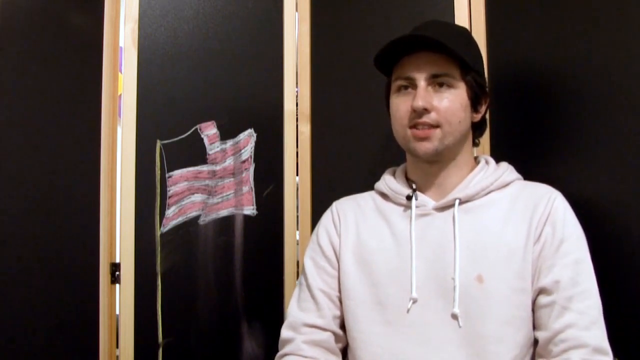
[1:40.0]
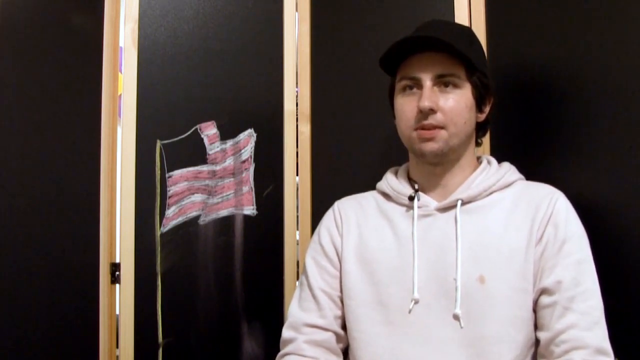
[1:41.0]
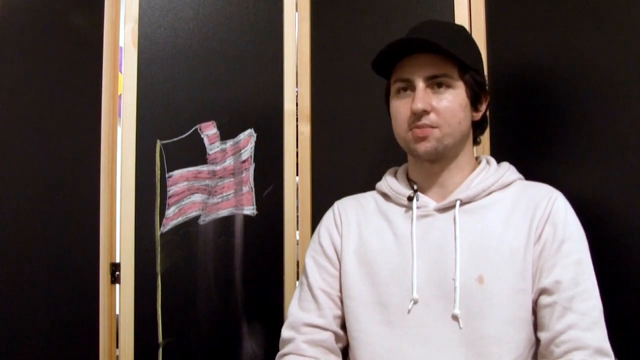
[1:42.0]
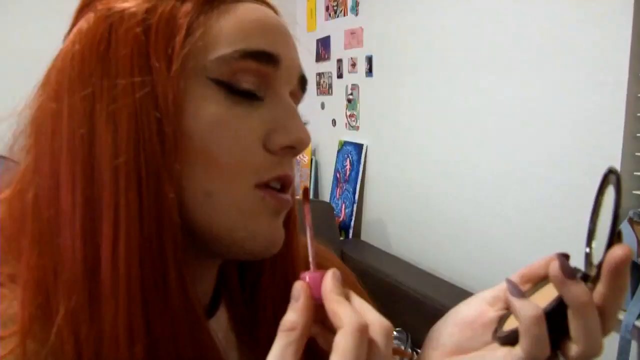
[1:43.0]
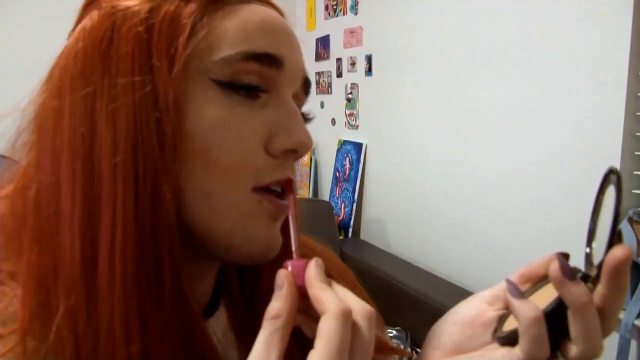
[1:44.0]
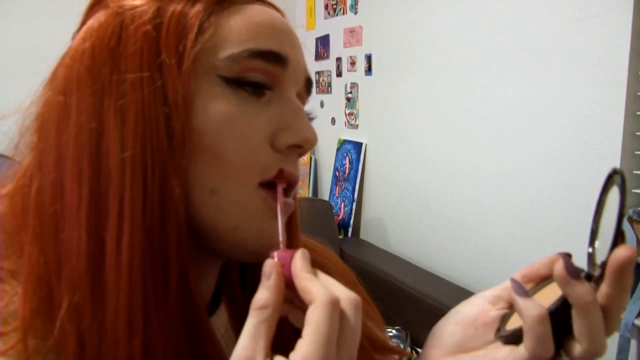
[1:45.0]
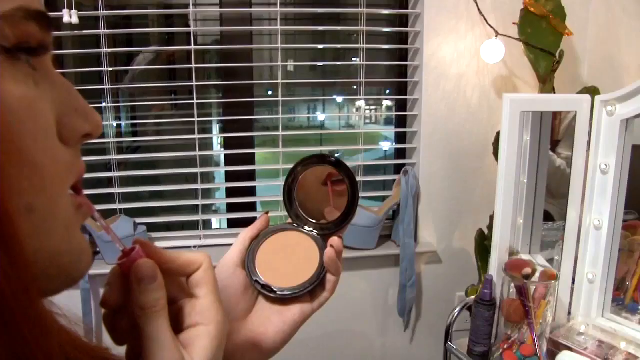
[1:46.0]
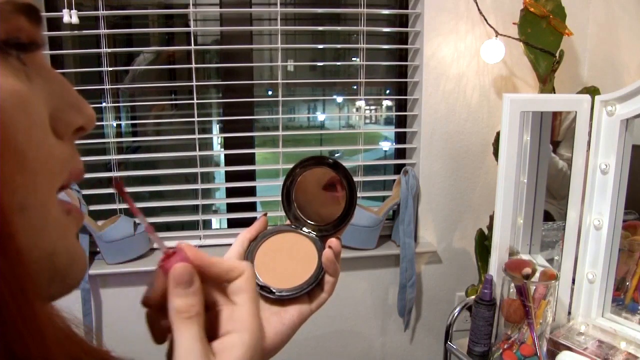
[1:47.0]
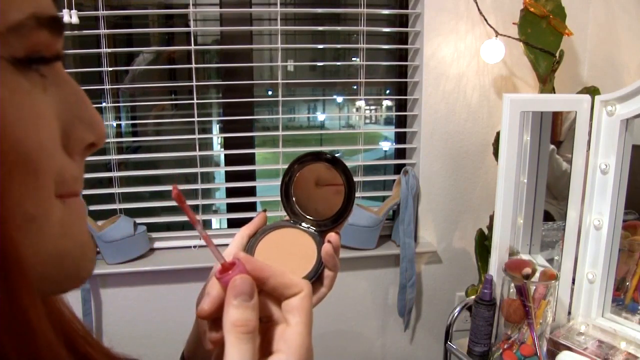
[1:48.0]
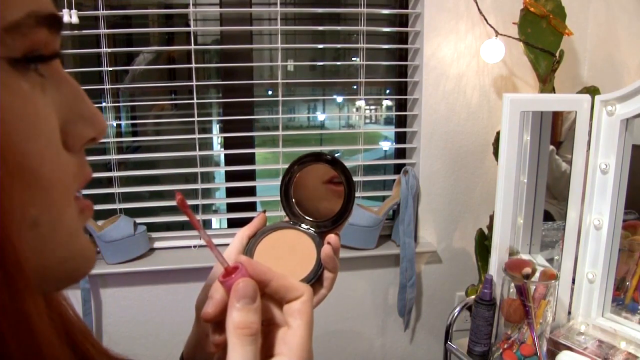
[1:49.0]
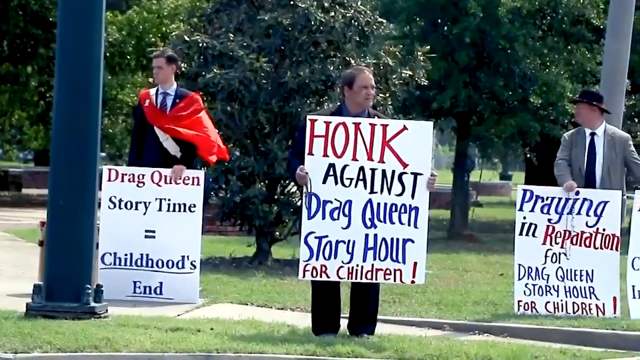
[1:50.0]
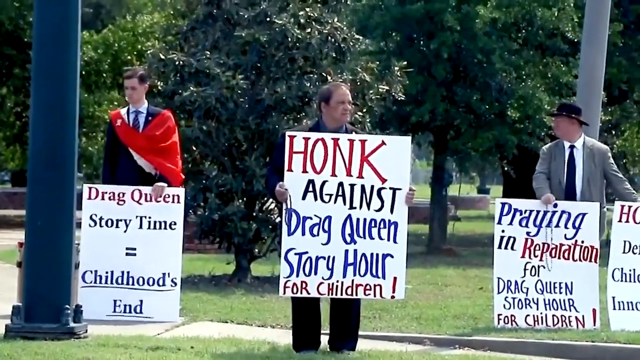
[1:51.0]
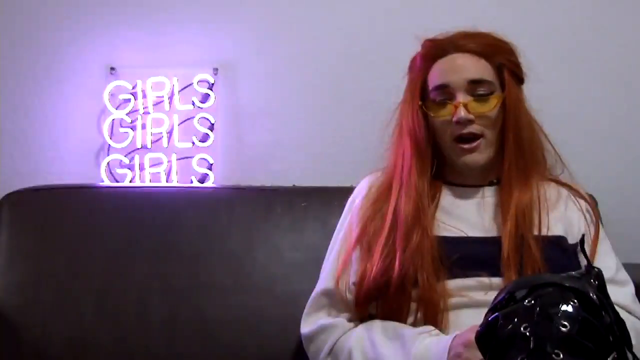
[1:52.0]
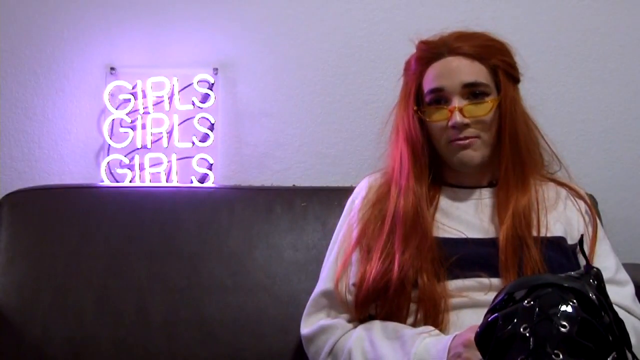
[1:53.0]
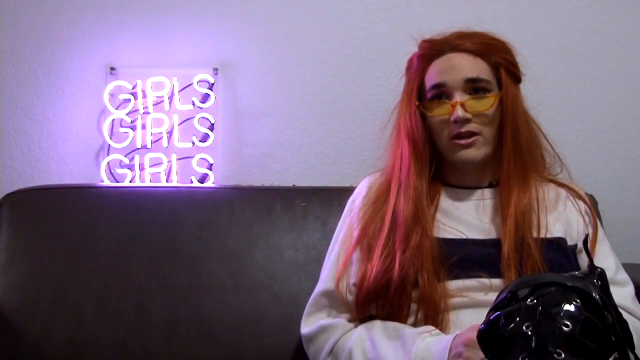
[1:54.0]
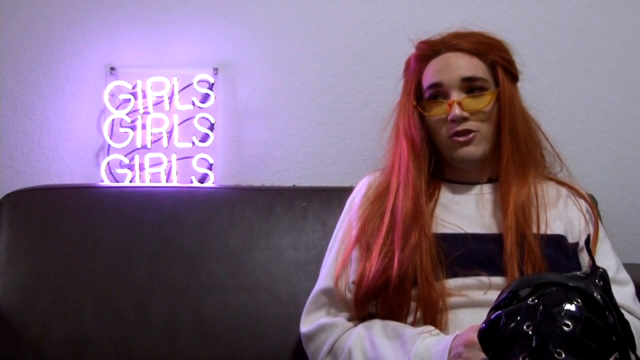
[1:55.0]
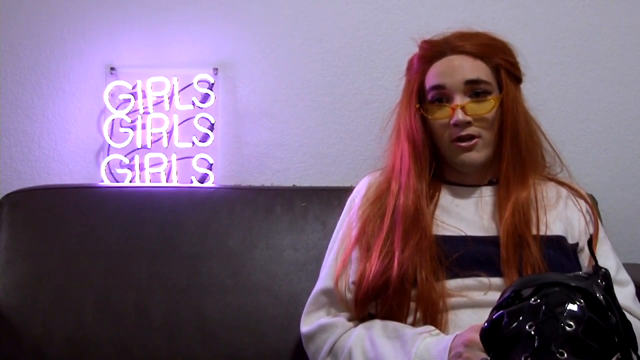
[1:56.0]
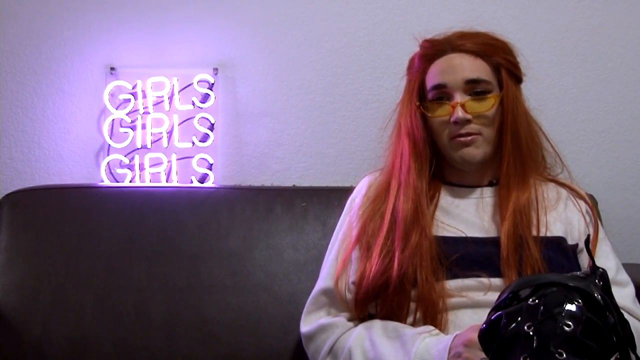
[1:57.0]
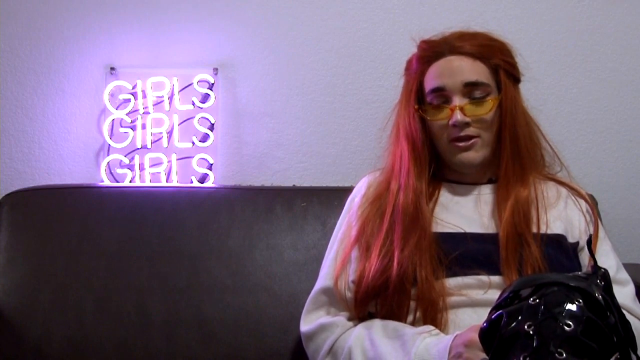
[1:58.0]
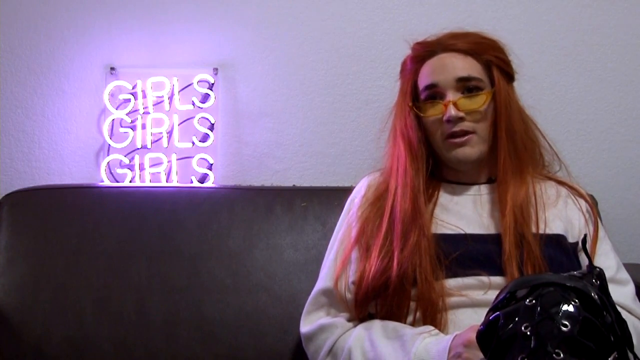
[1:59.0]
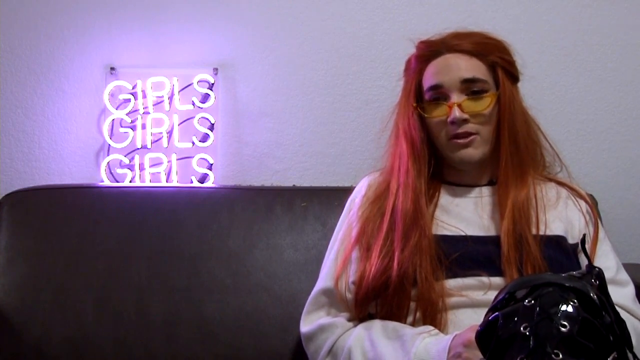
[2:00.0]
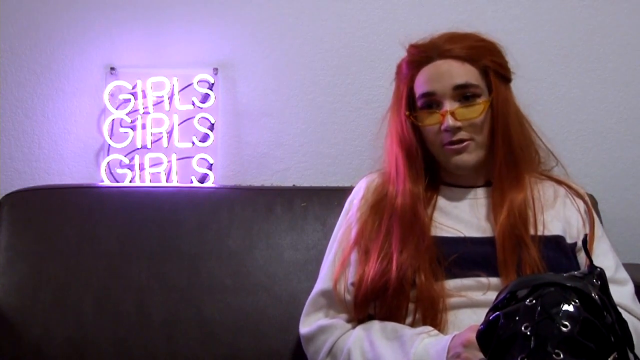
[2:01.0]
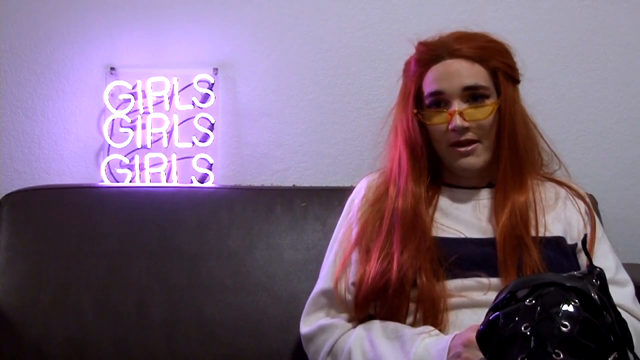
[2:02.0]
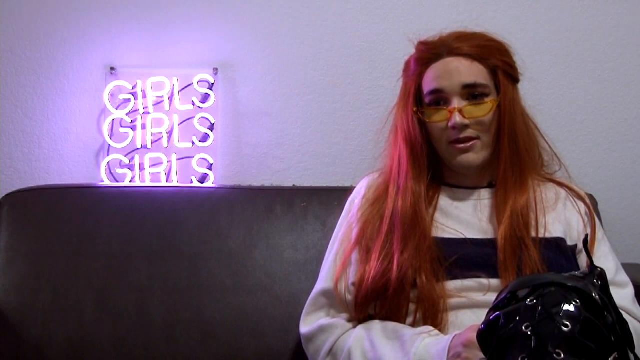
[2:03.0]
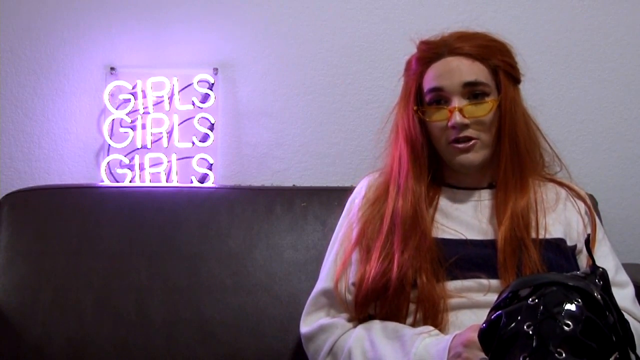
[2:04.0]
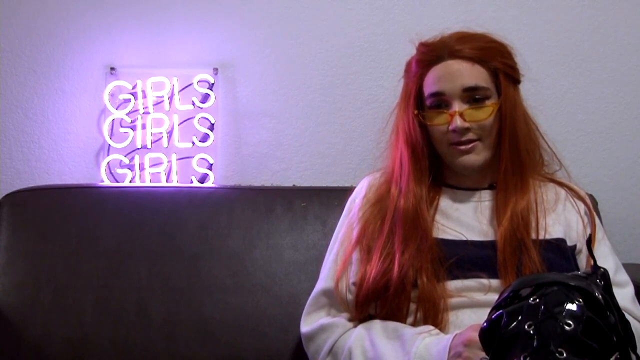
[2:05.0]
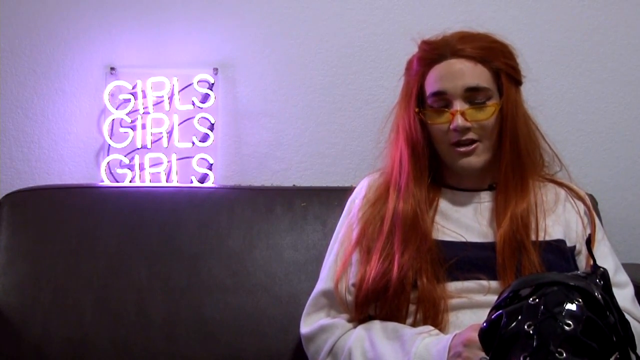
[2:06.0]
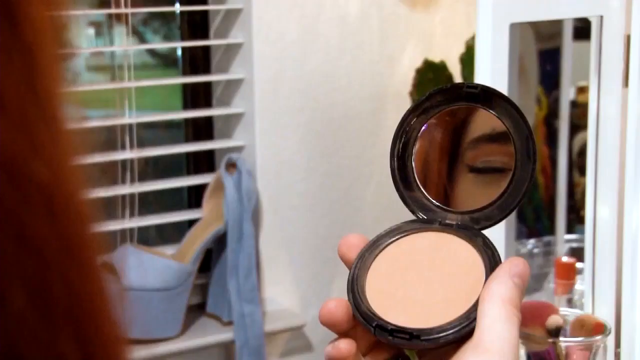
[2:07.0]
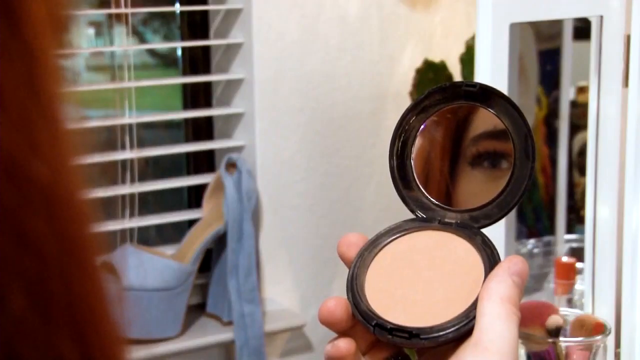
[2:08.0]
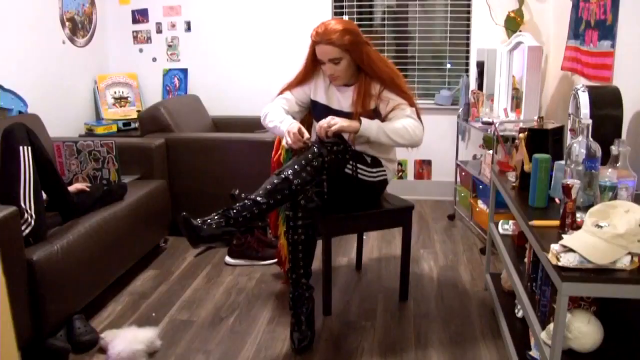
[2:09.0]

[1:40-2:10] The person continues talking to the camera. A different shot shows the right-hand side of a person with heavy eye makeup and a long orange wig, applying lip gloss to their lips with their right hand while looking into a compact mirror held in their left hand. The angle switches to the reflection in the small compact mirror, where they rub their lips together to spread the gloss. Next, people protest outside, appearing to be against drag queens, holding up different boards with messages against drag queen story hour. The video returns to the person on the couch, who sits on its left-hand side. At the back of the couch is a pink neon sign with the word "girls" written three times. The person wears glasses; their knee moves a little as they talk to the camera, and they raise their eyebrows.